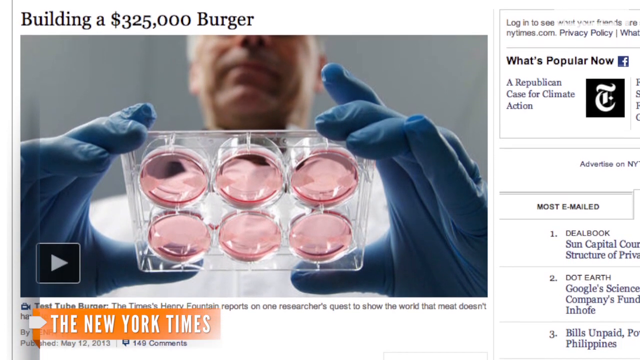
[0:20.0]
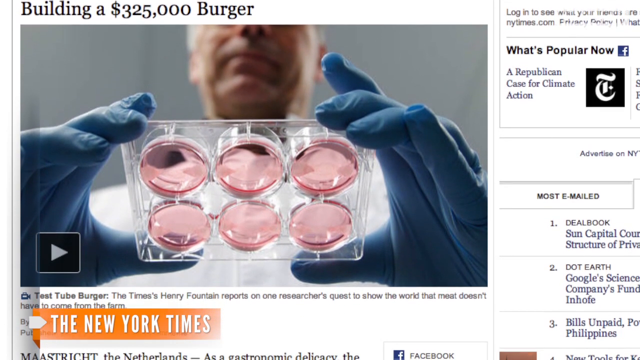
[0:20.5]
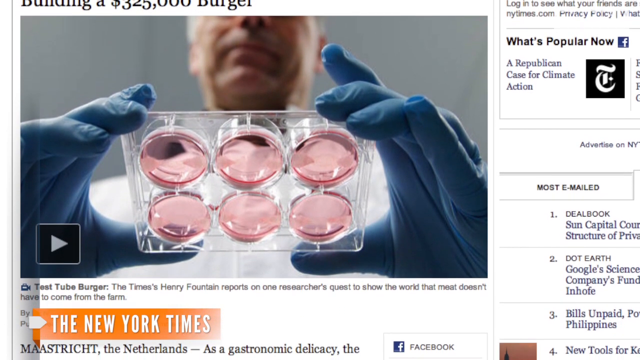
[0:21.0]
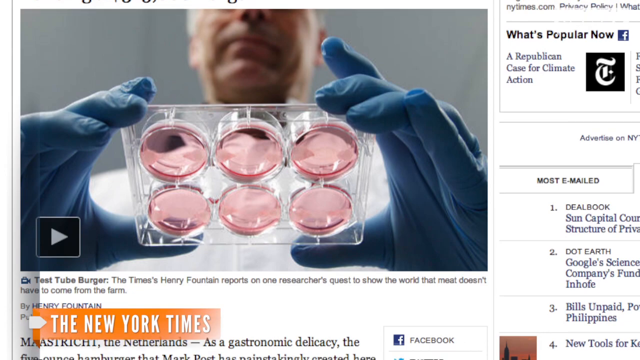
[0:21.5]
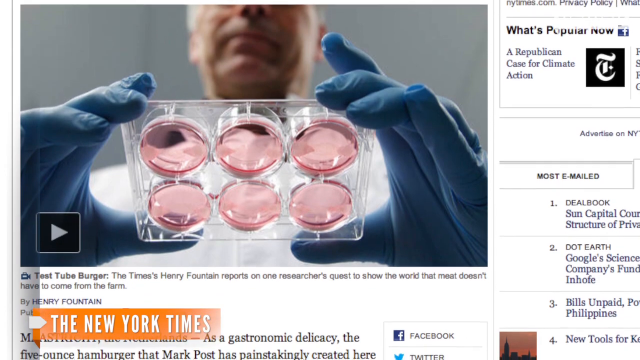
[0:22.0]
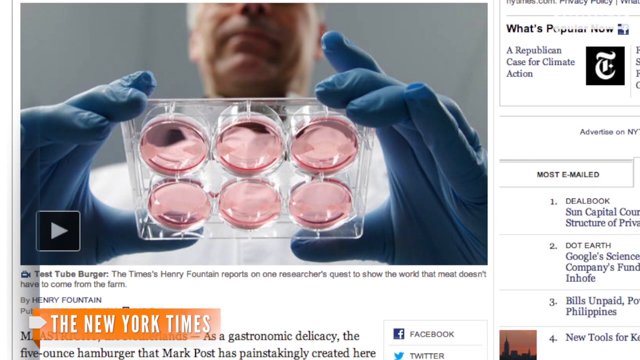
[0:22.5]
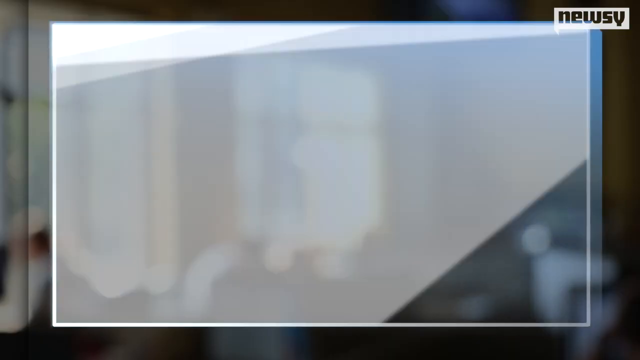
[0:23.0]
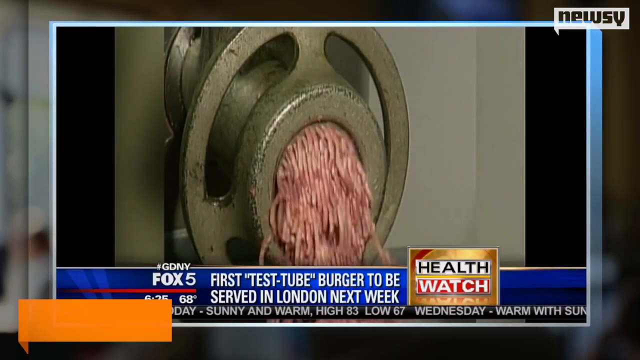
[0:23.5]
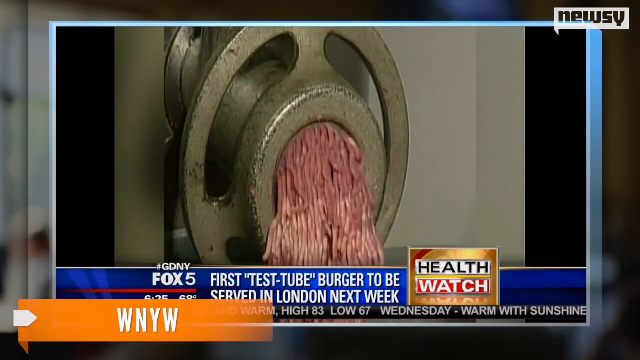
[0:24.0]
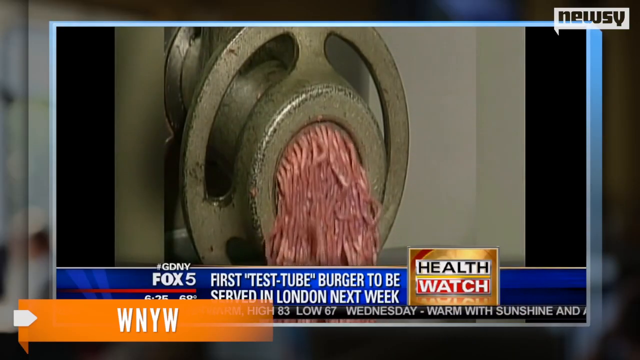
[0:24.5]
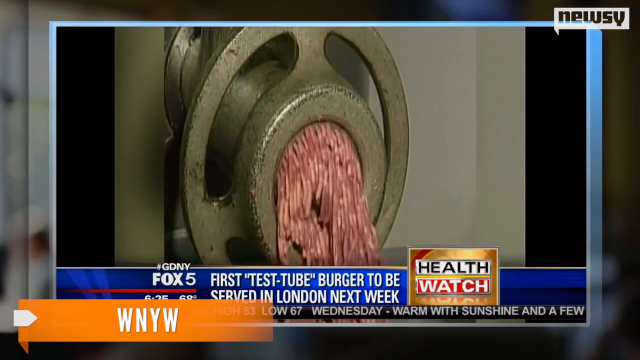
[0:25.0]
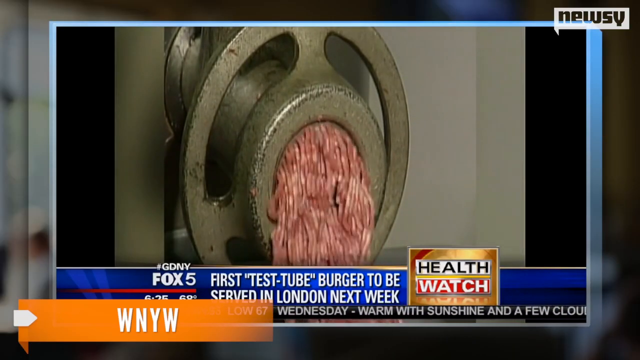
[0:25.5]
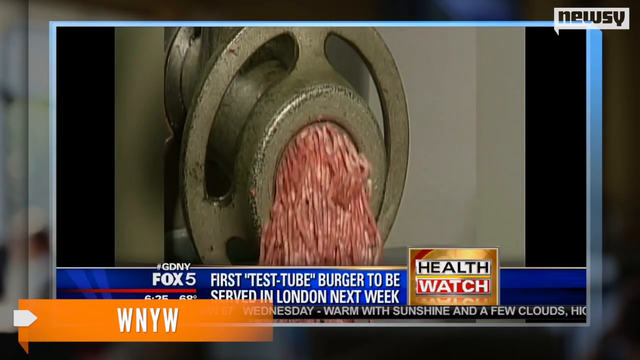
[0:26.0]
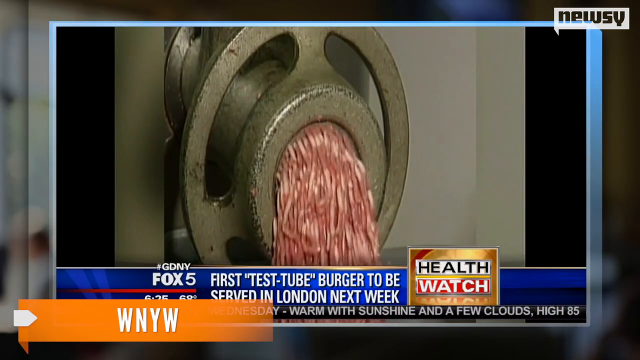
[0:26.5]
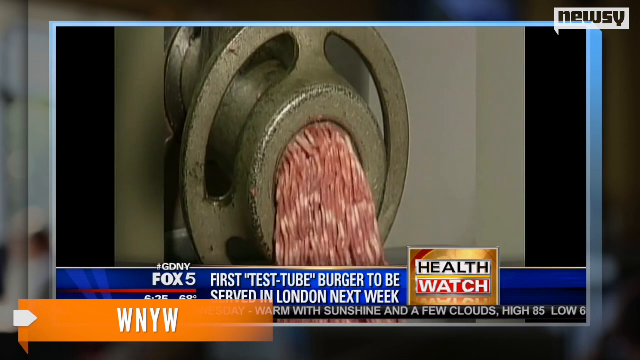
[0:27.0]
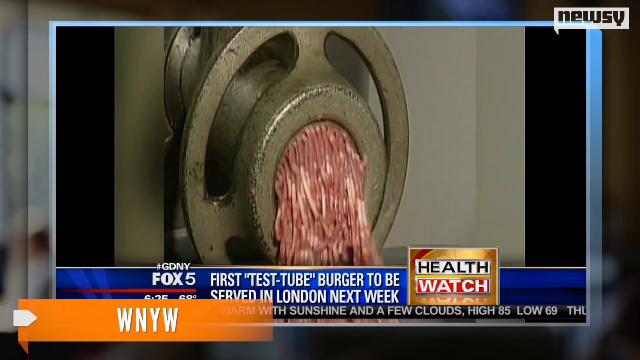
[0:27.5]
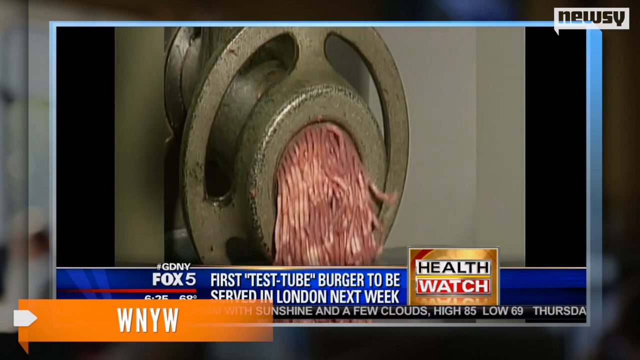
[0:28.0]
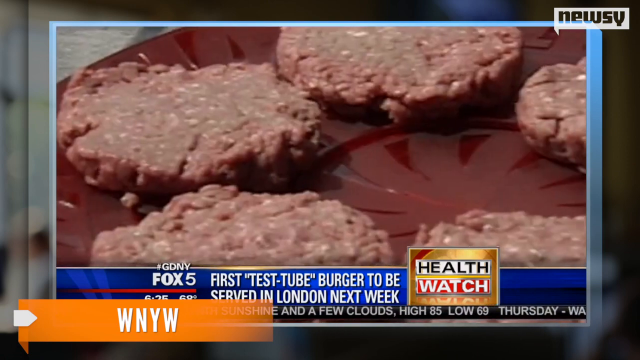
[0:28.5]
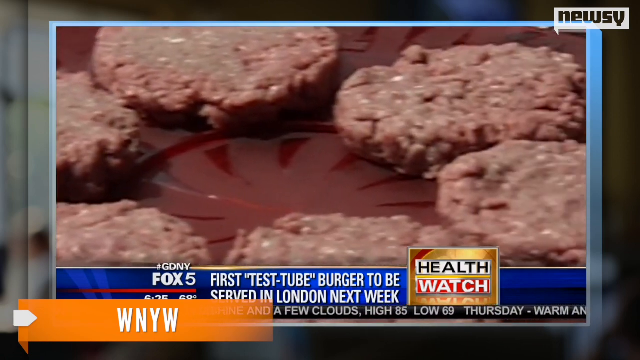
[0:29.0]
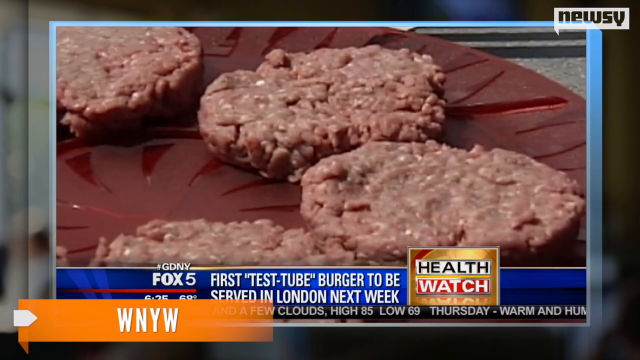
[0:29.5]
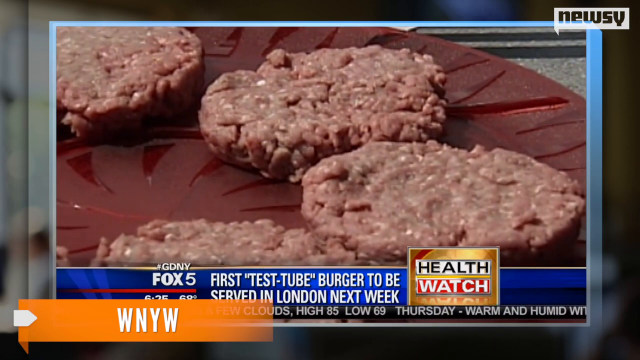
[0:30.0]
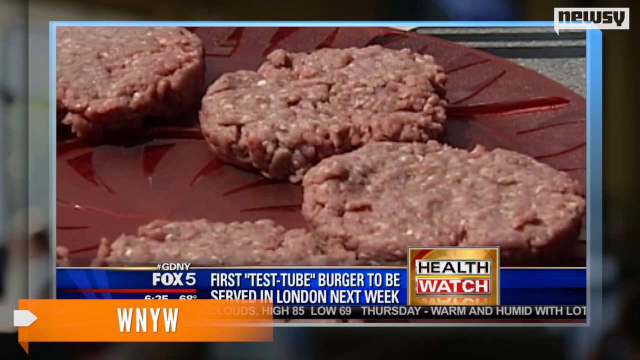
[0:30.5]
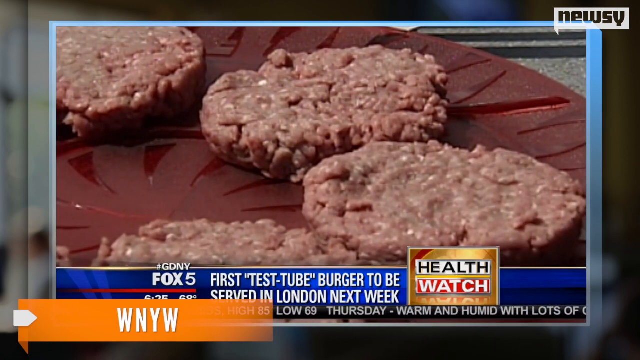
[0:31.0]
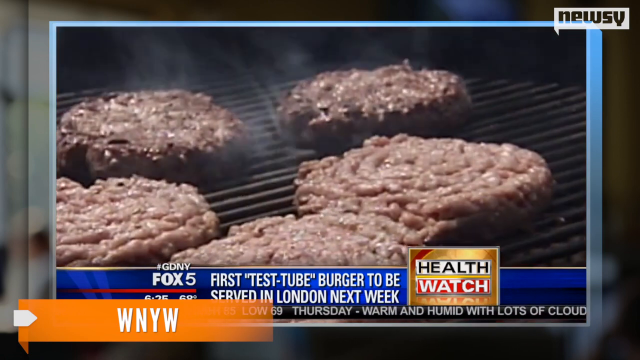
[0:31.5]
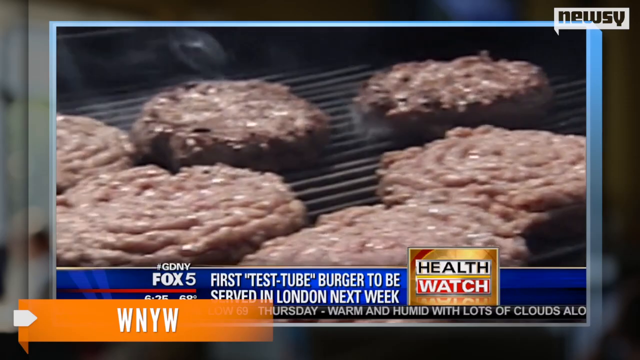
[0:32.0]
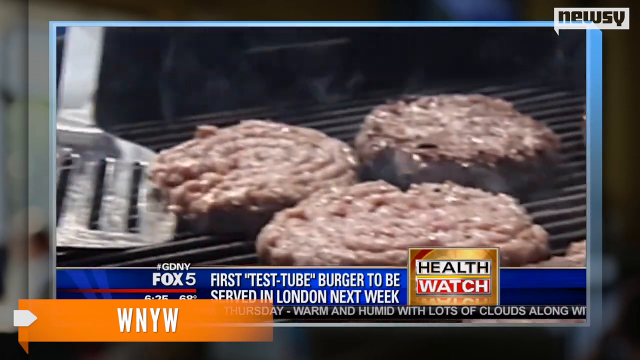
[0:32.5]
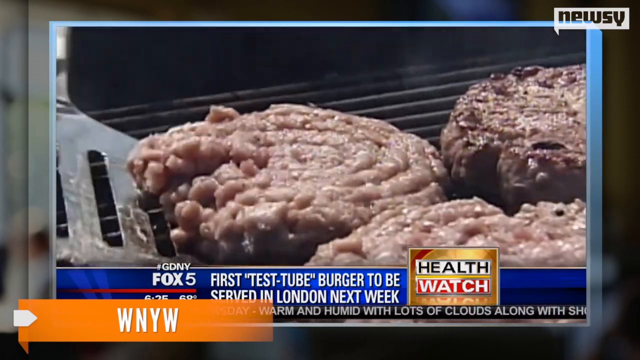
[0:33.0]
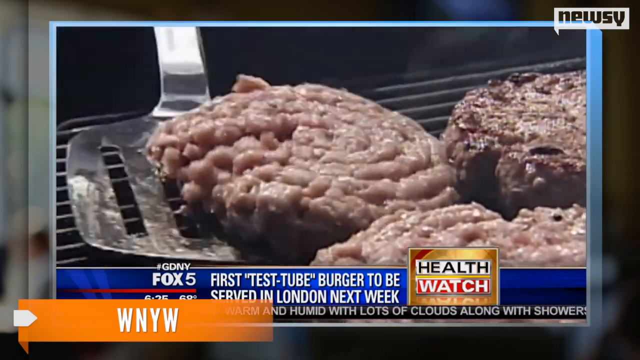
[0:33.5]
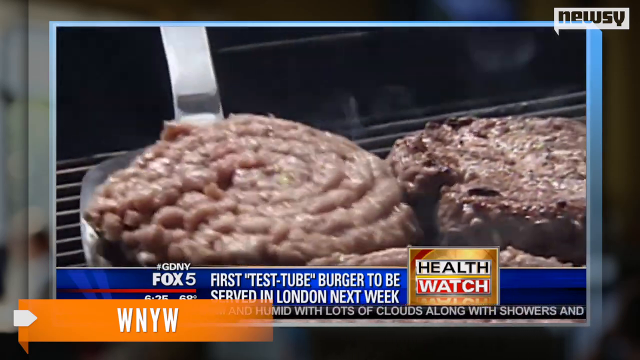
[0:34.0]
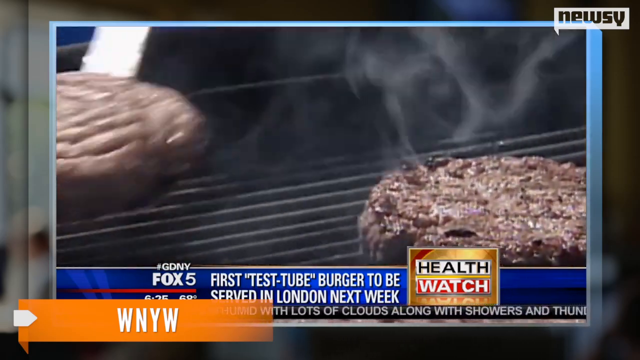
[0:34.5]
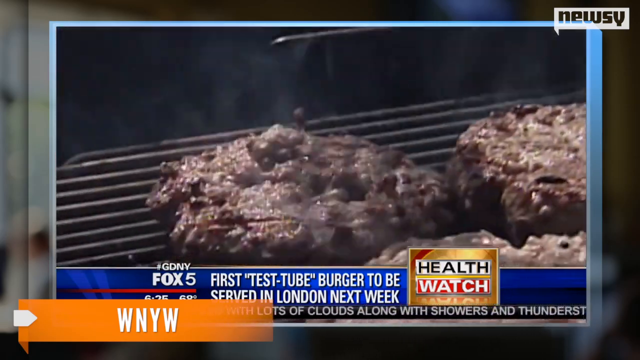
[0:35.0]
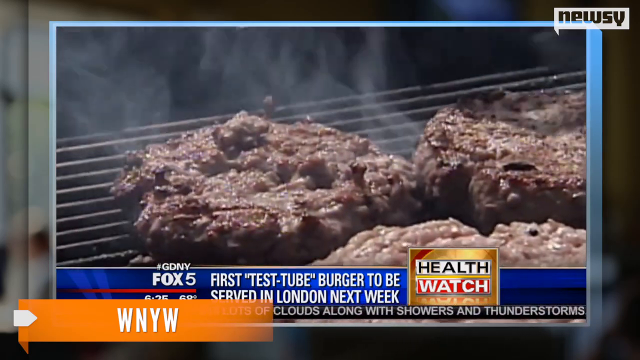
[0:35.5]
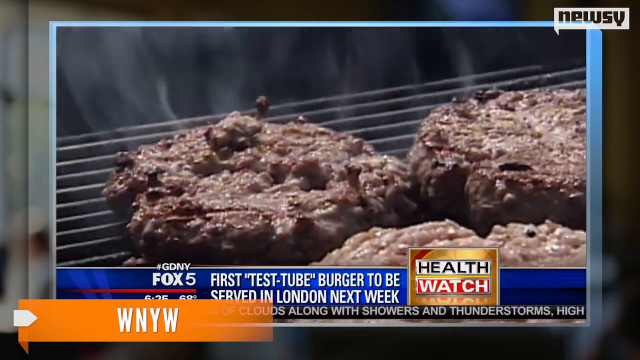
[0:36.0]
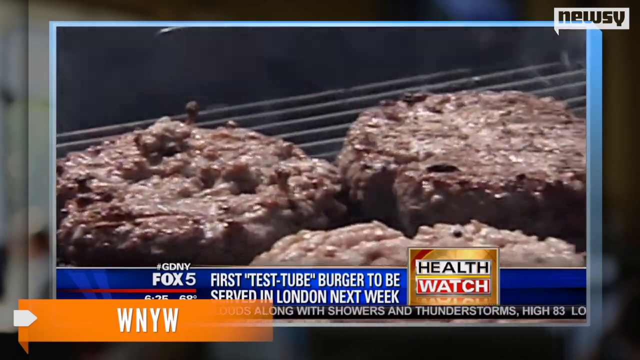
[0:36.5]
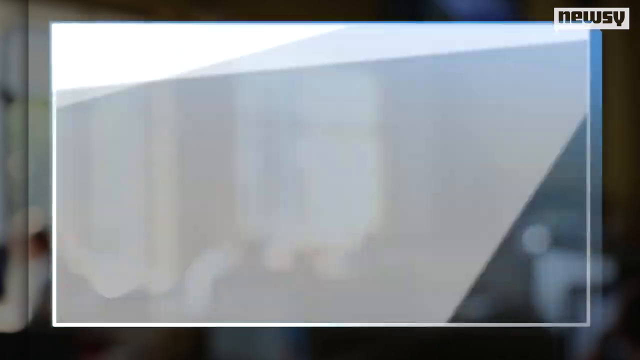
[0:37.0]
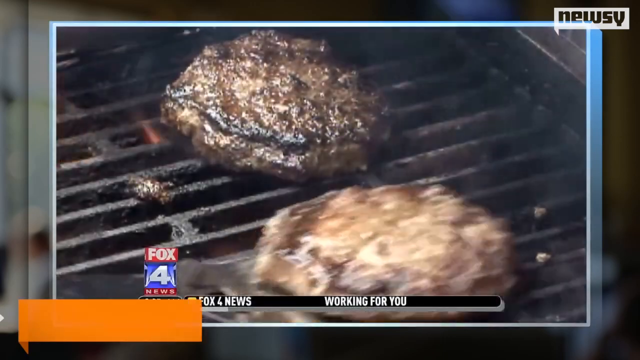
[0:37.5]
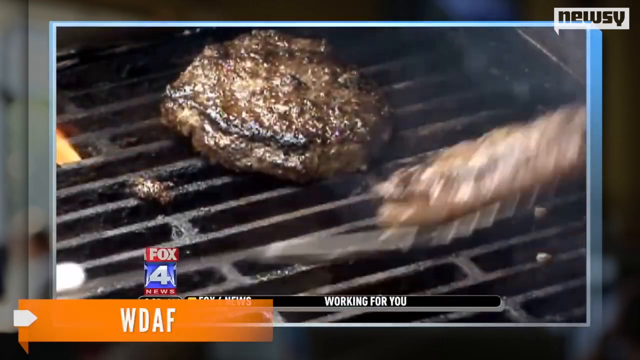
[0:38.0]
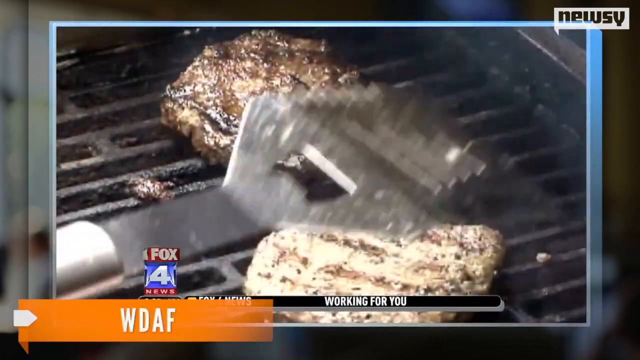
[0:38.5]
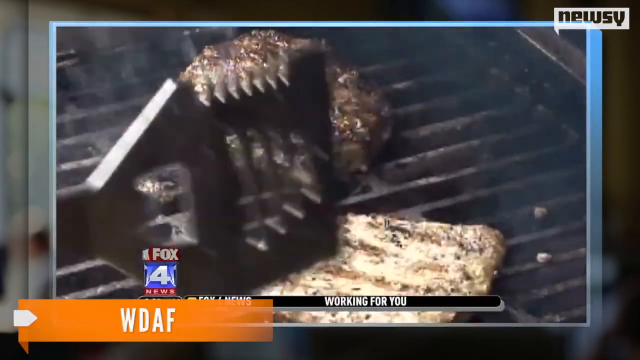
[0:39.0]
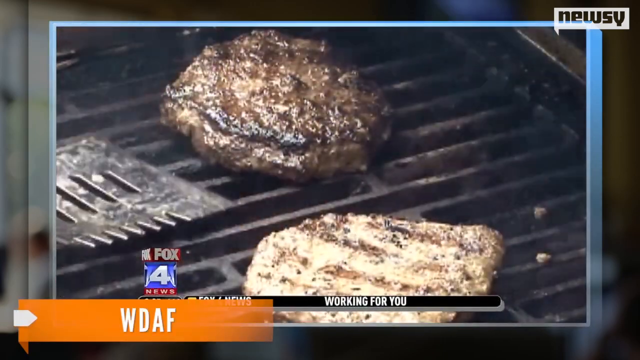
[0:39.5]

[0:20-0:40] A man holds a product that seems to be something muddy and pink; the person holding the tray is male. The news bulletin text reads "first test should be set in London next week." It is a health watch news segment. Machinery used to produce patties for making bagels is shown, followed by a demonstration of how to cook the patties. The light pink muddy substance seems to be one of the materials used to make the patties.